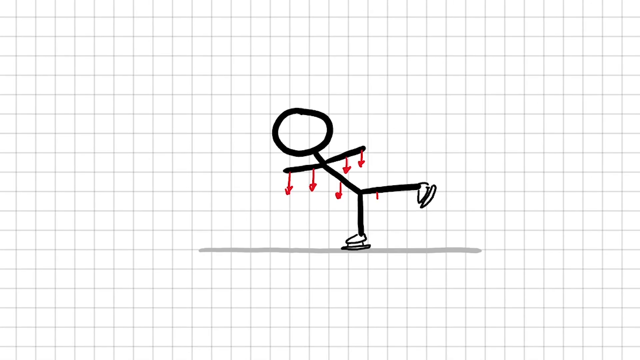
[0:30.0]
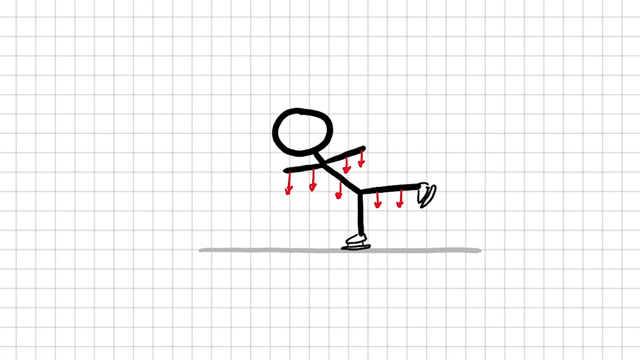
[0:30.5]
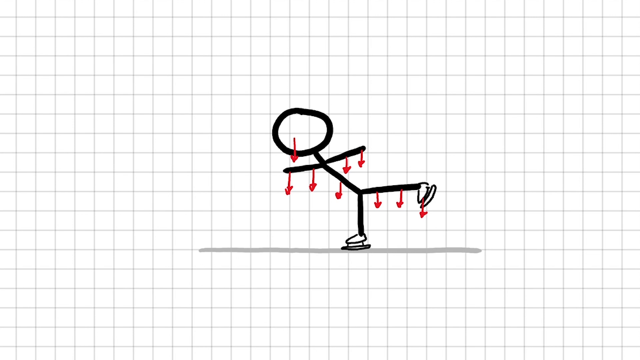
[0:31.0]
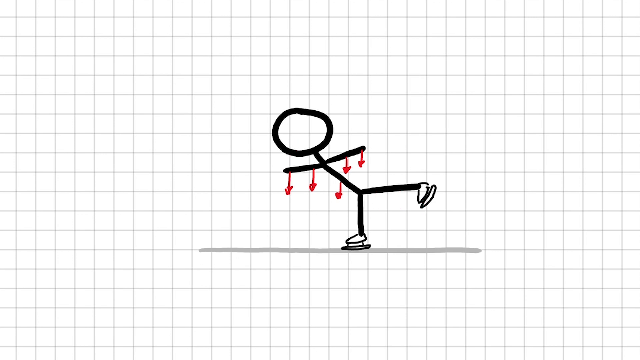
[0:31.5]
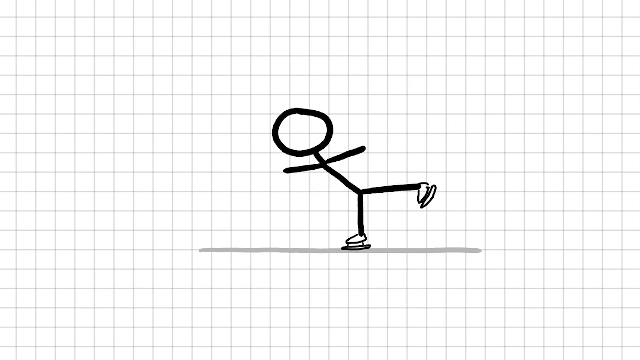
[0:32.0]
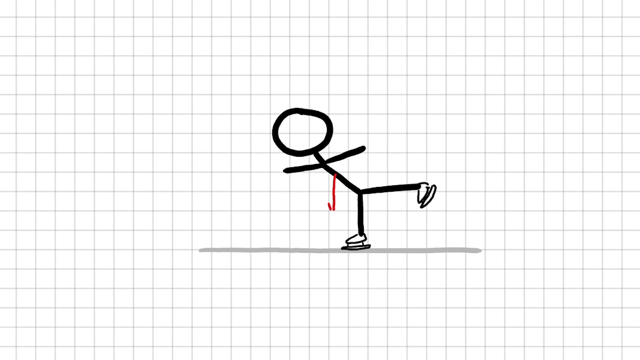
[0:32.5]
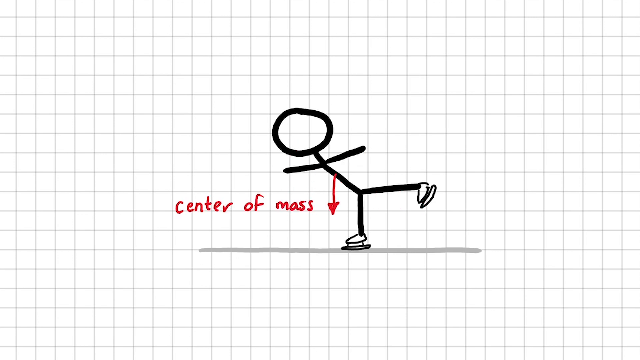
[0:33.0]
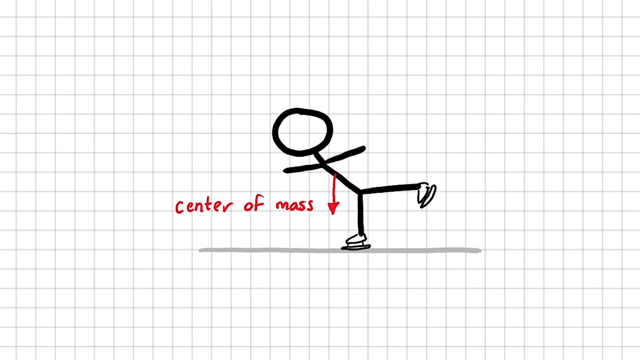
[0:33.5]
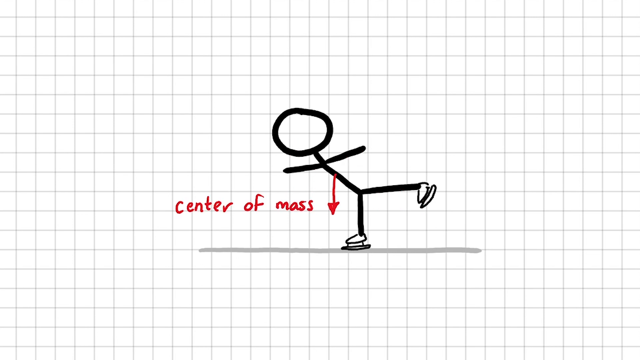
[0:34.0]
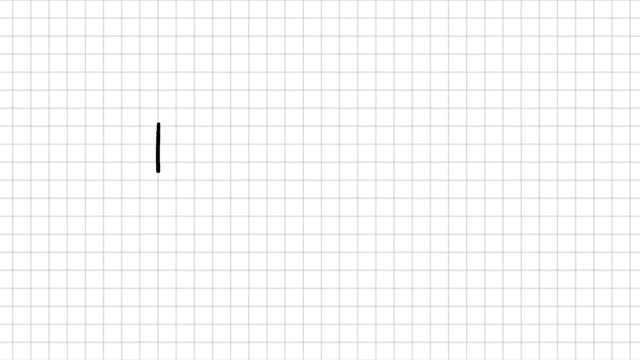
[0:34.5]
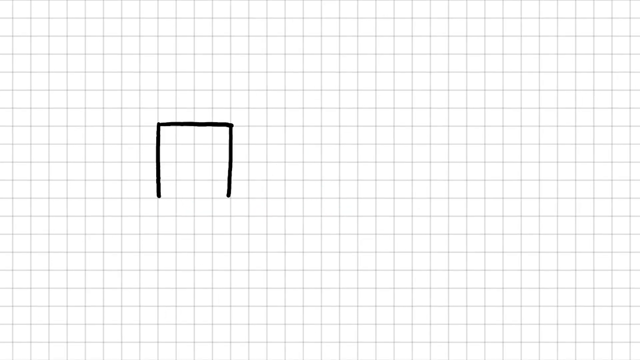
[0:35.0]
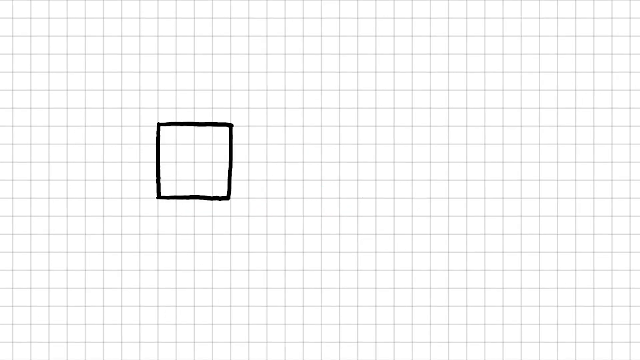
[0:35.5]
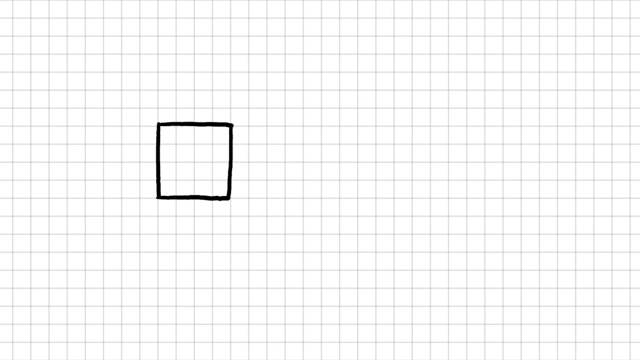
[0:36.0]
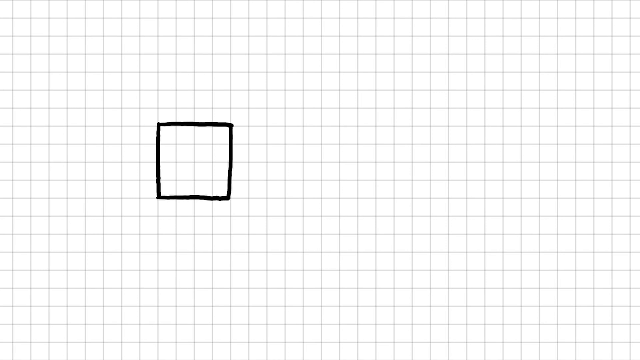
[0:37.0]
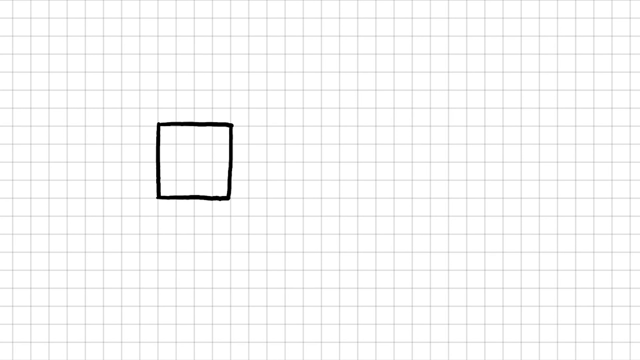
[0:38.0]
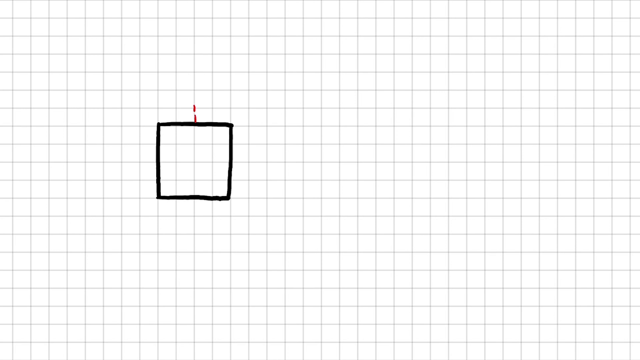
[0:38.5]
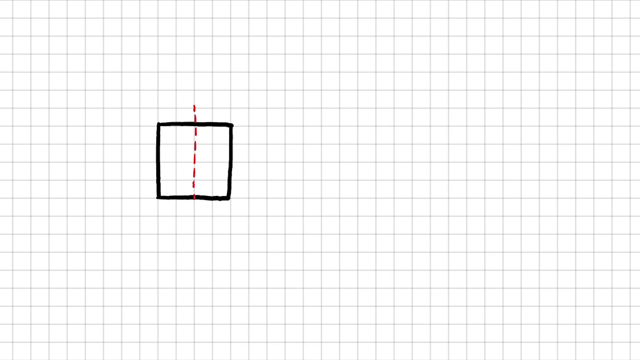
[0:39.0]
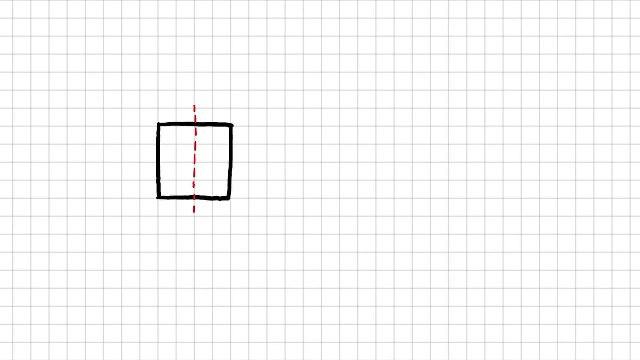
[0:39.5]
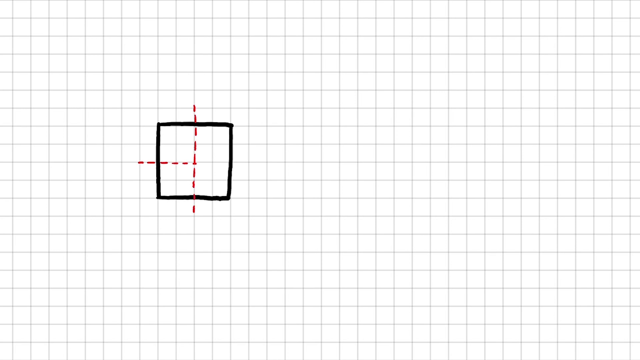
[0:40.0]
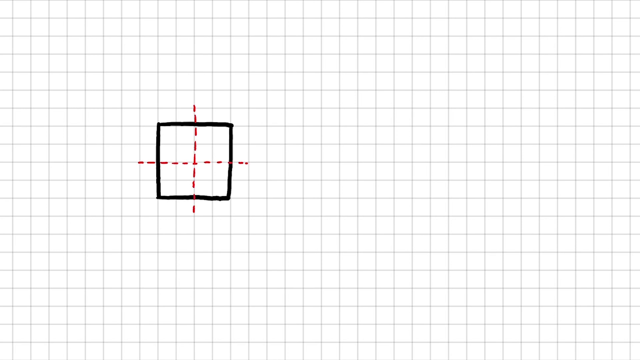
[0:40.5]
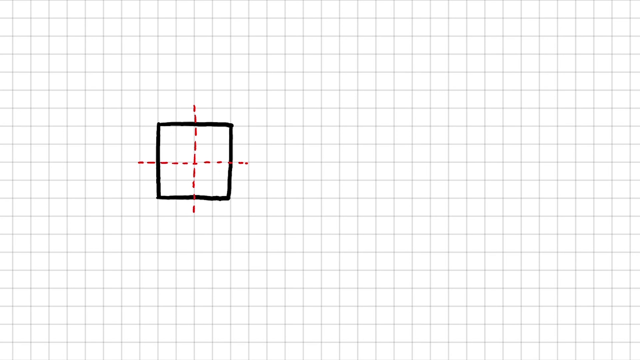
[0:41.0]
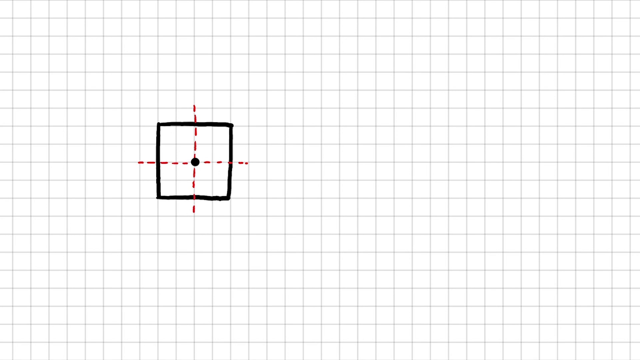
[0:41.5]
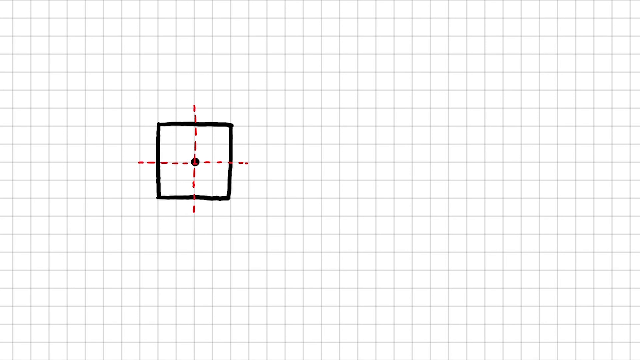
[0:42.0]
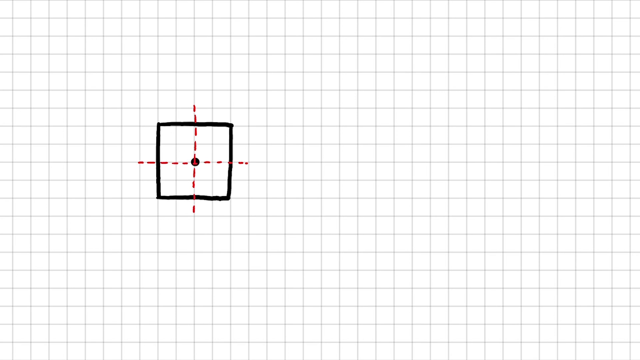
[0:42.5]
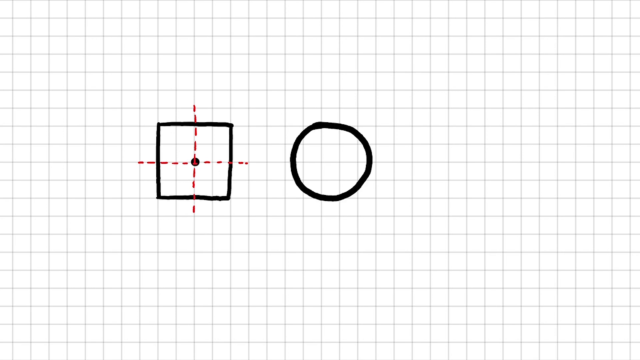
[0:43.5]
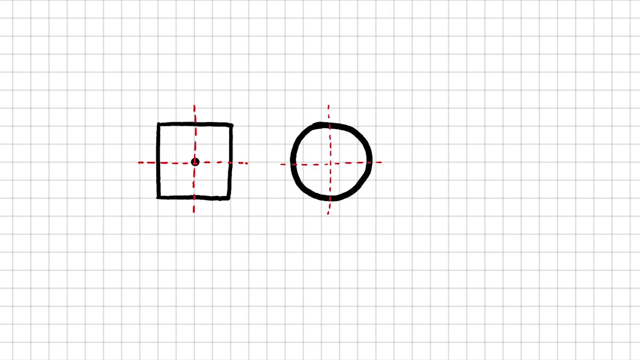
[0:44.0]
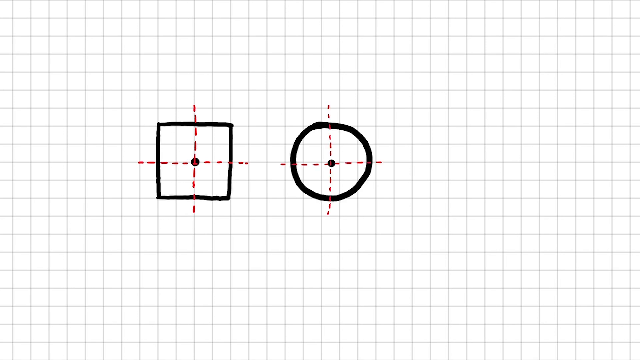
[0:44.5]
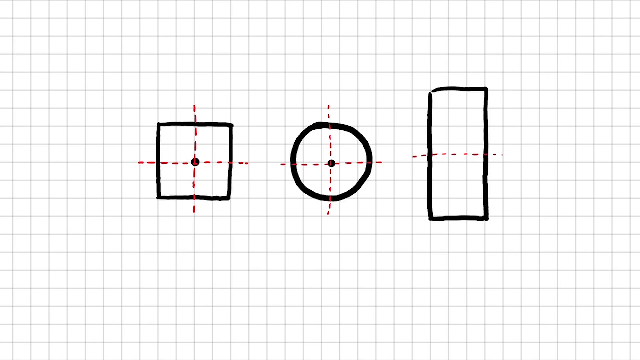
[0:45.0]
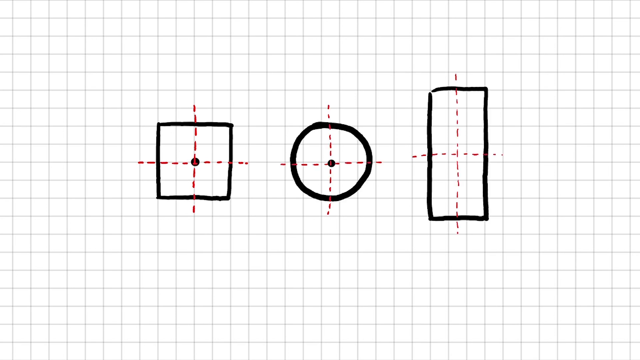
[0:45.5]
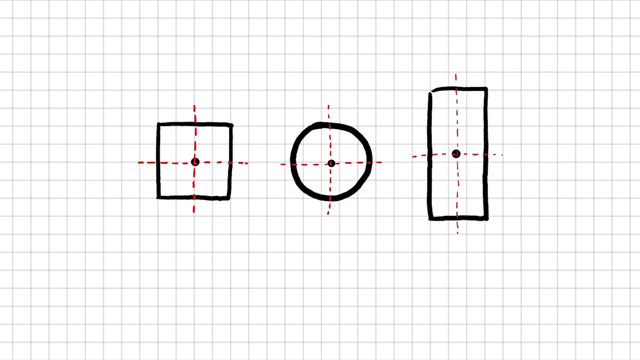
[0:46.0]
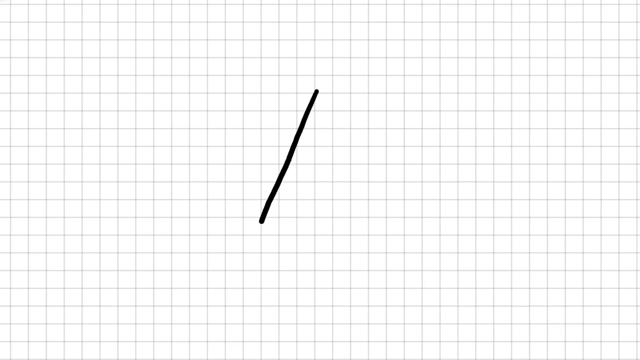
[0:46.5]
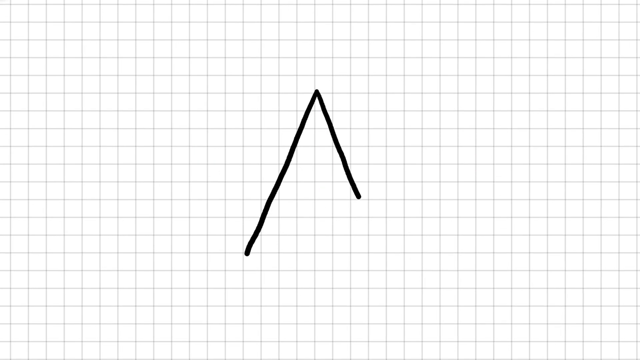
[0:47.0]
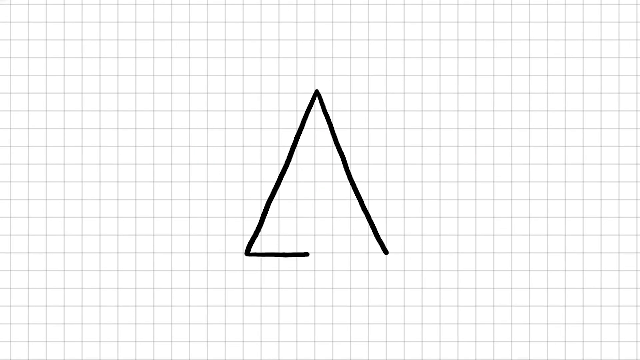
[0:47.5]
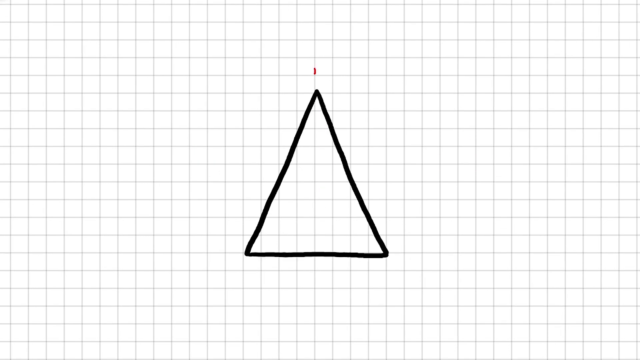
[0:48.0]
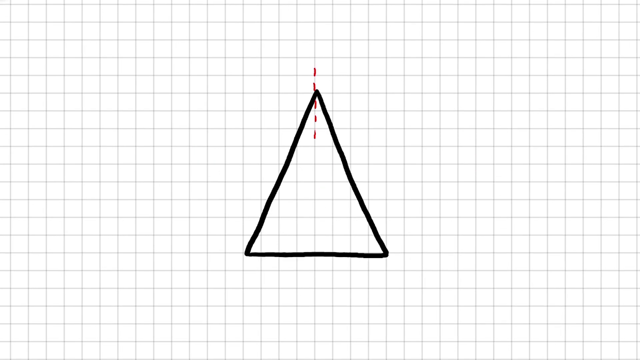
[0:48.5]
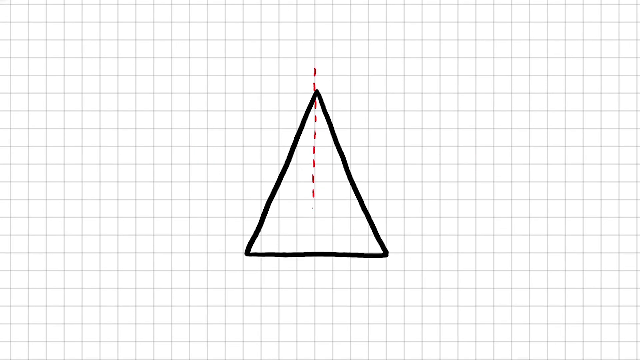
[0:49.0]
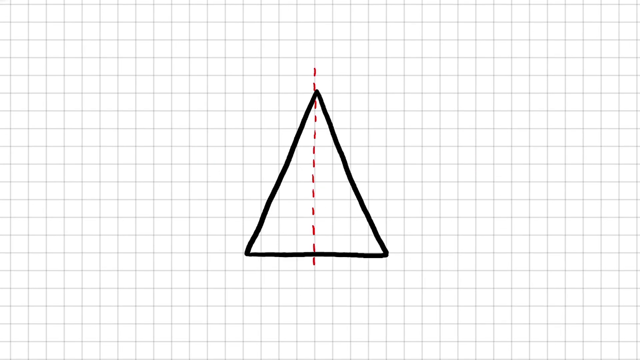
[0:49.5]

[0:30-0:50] A man is shown with the distribution of forces on him and a label reading "center of mass". Different shapes, such as a square and a rectangle, form in the background with red broken lines on them. Another part shows a triangle with red dotted lines in between, depicting the distribution of forces on individuals and on different shapes.